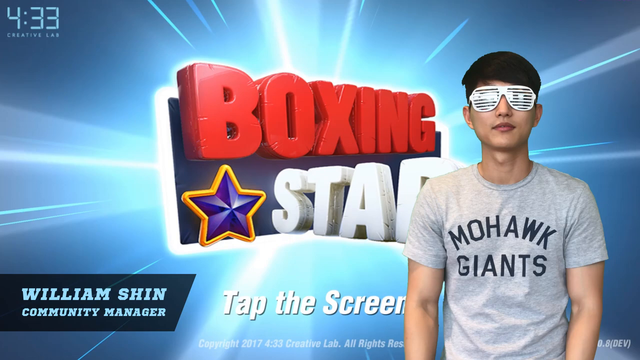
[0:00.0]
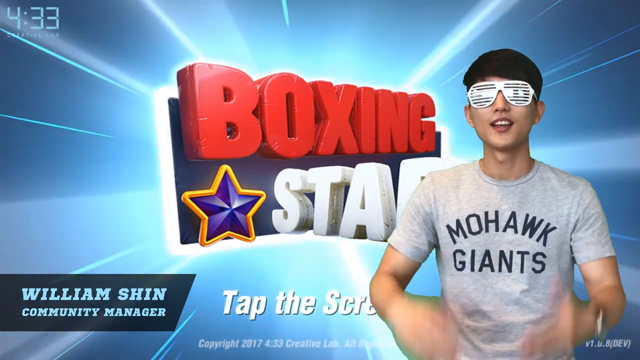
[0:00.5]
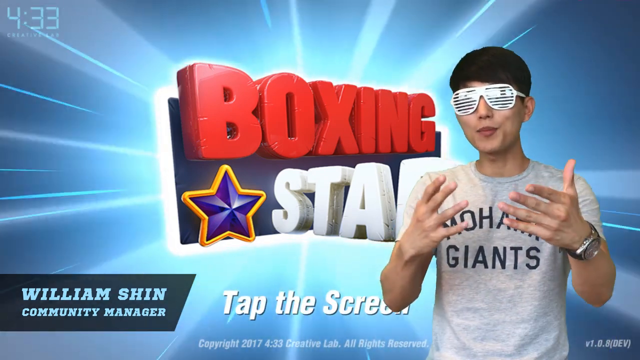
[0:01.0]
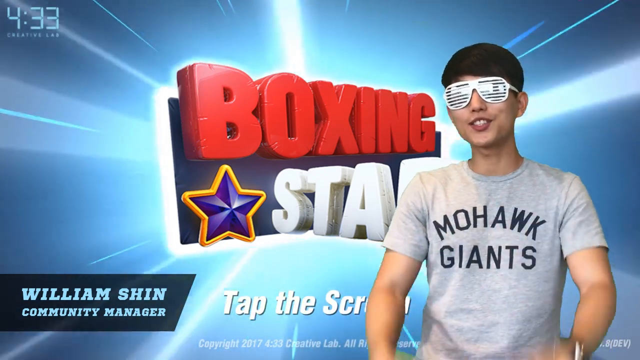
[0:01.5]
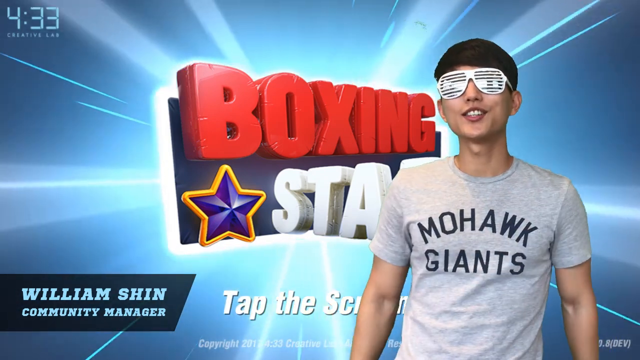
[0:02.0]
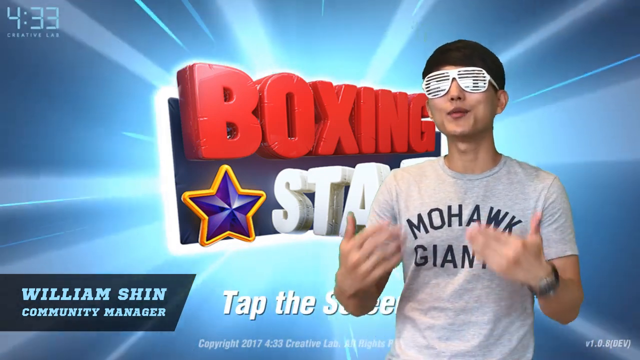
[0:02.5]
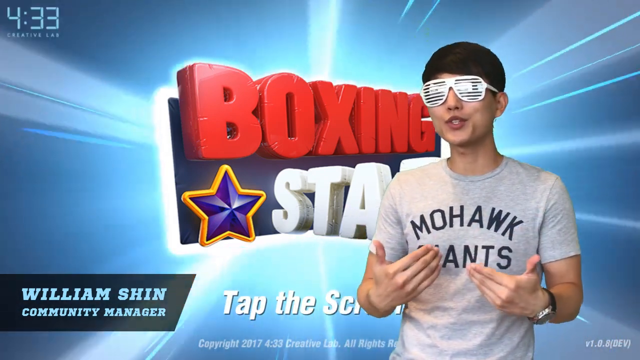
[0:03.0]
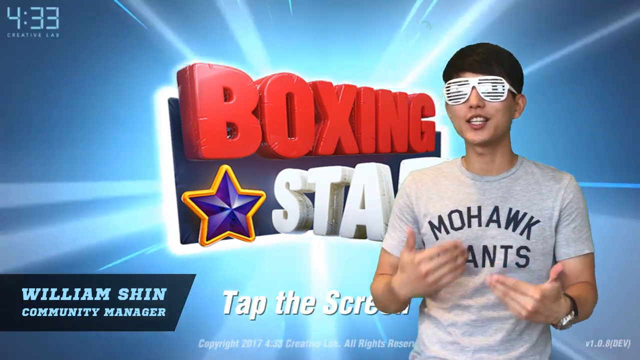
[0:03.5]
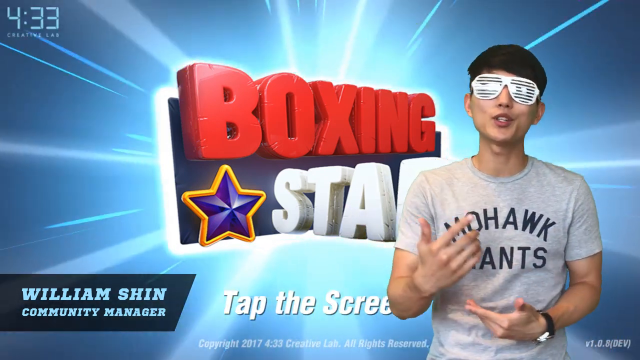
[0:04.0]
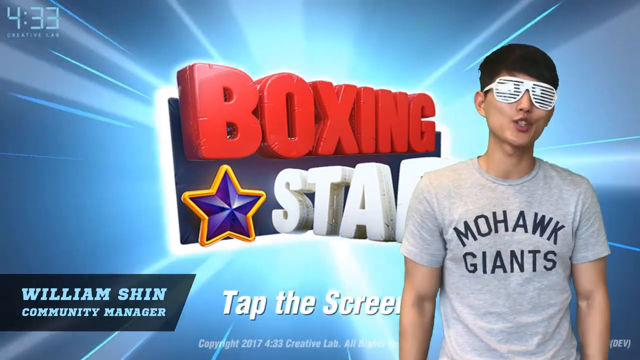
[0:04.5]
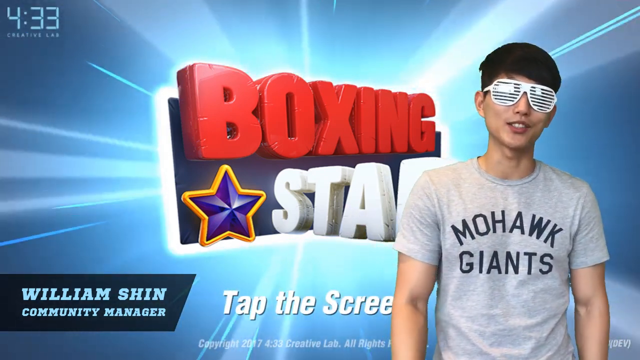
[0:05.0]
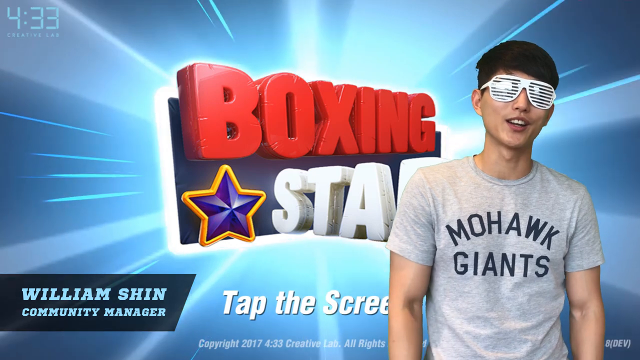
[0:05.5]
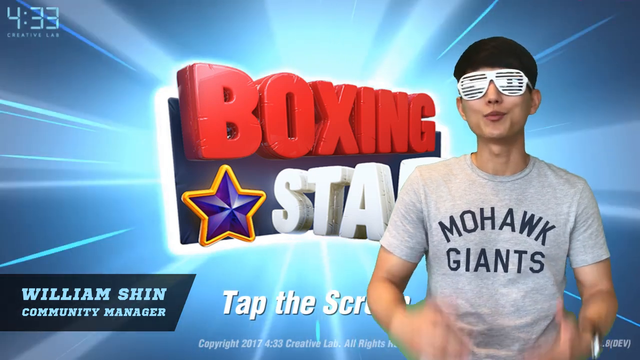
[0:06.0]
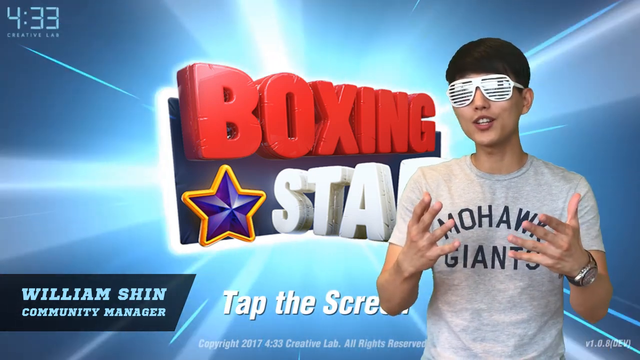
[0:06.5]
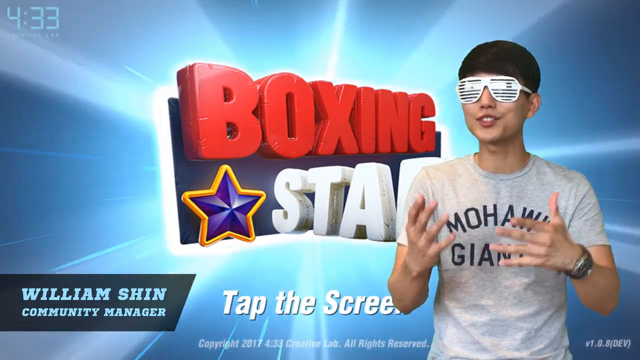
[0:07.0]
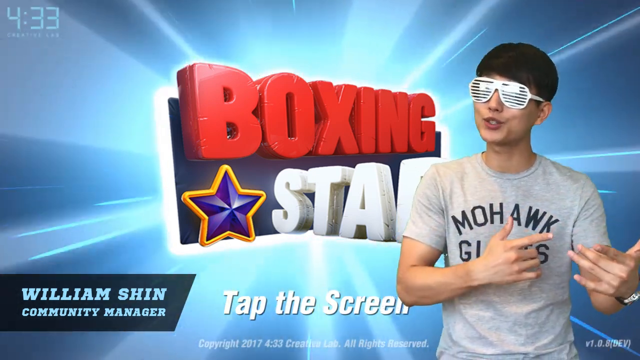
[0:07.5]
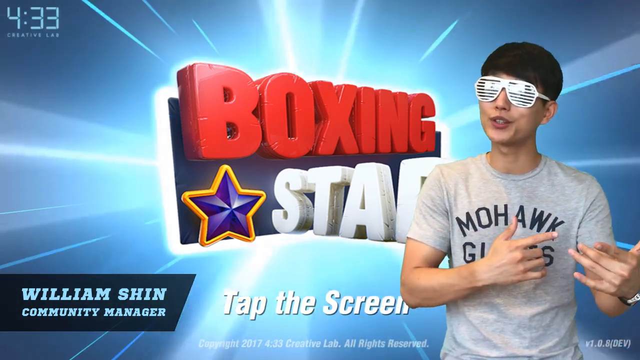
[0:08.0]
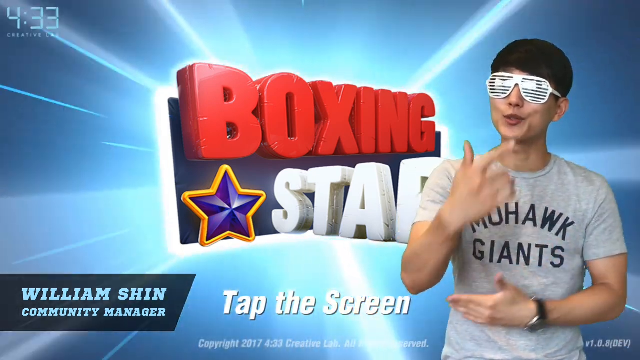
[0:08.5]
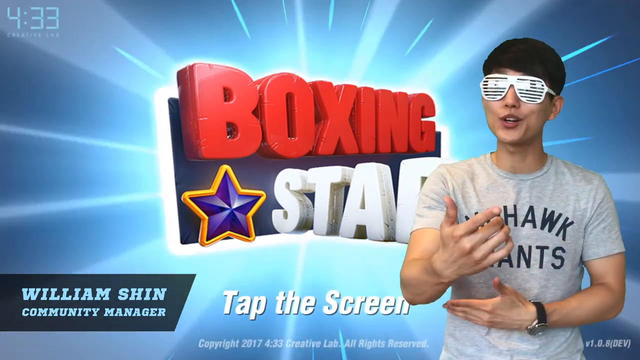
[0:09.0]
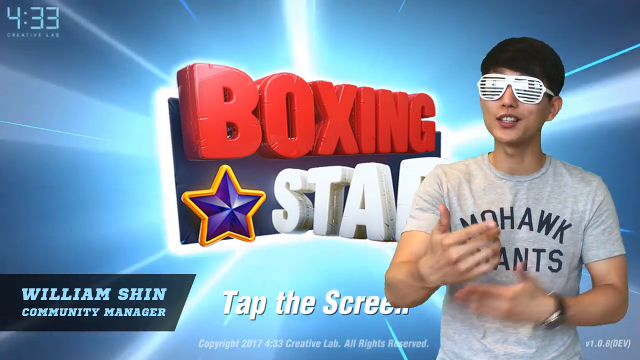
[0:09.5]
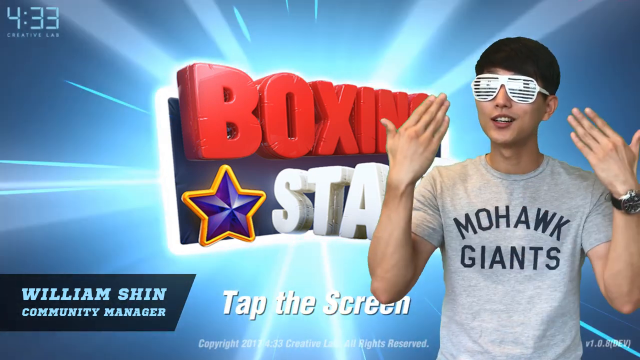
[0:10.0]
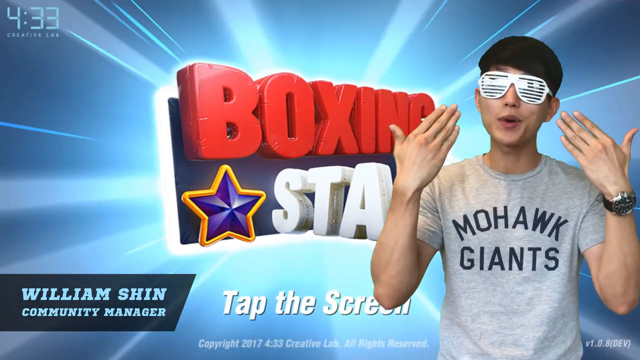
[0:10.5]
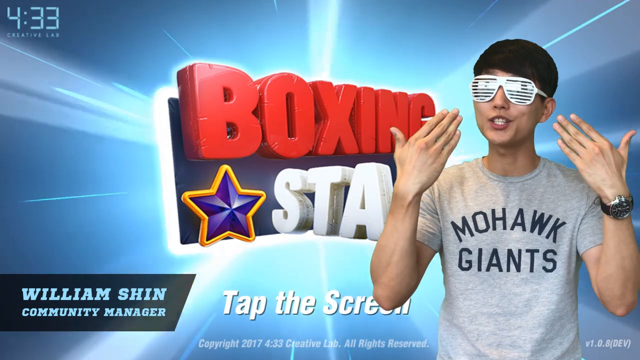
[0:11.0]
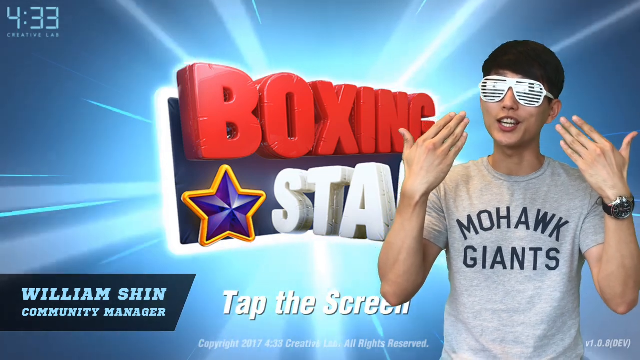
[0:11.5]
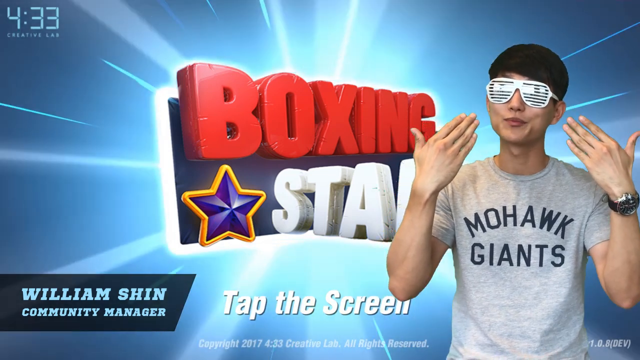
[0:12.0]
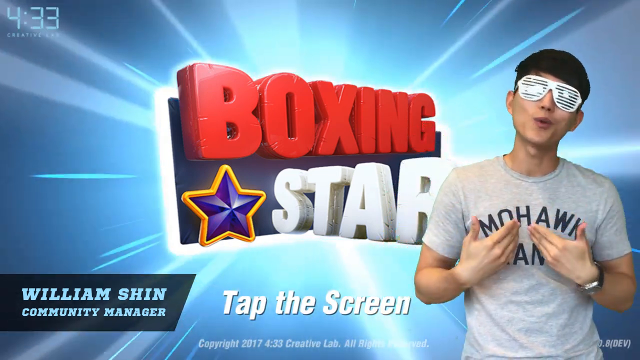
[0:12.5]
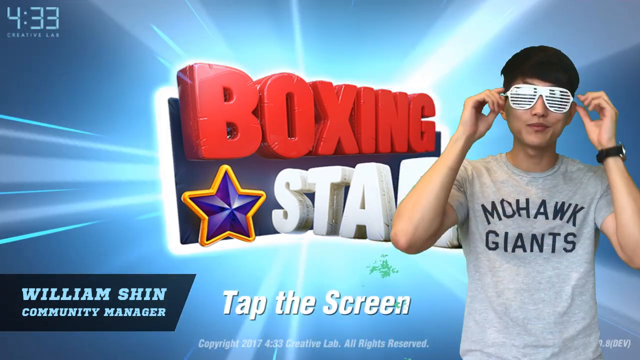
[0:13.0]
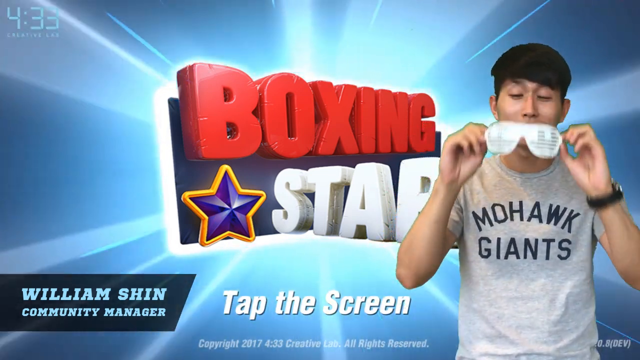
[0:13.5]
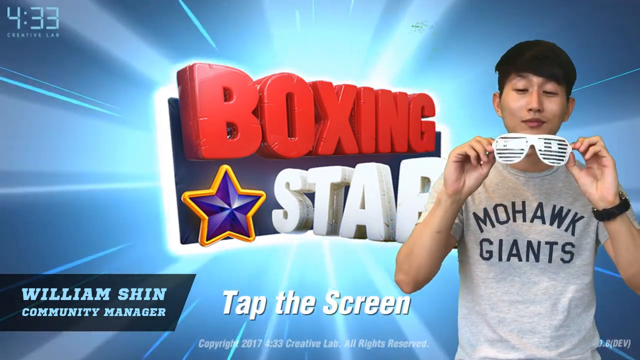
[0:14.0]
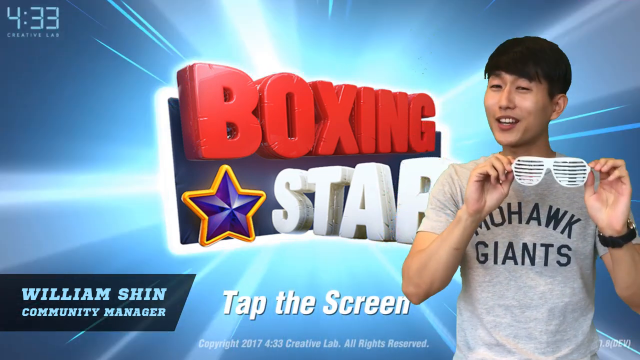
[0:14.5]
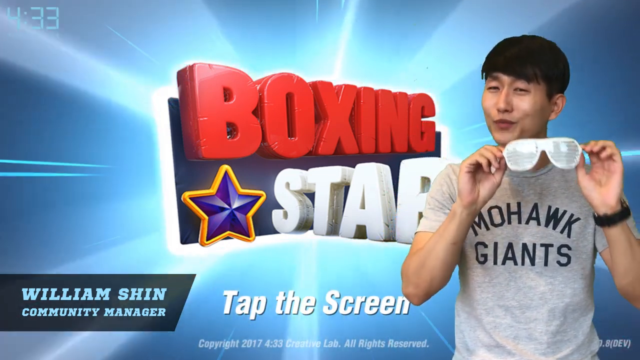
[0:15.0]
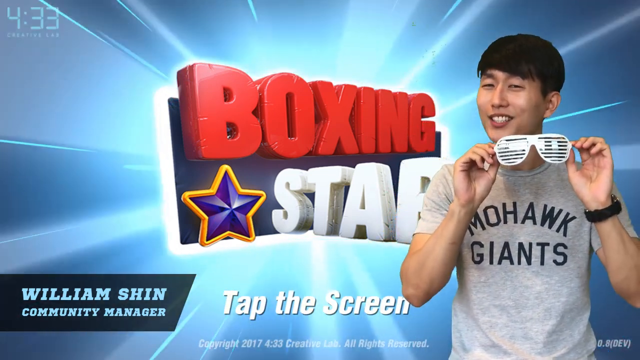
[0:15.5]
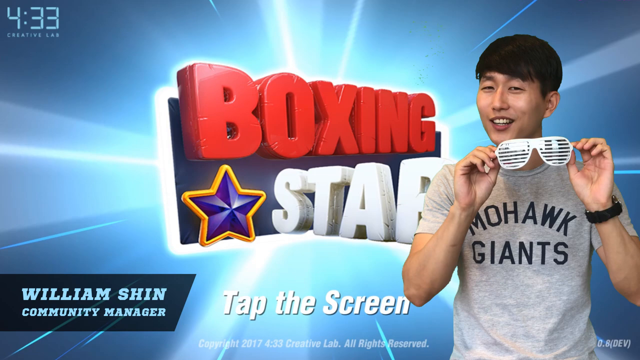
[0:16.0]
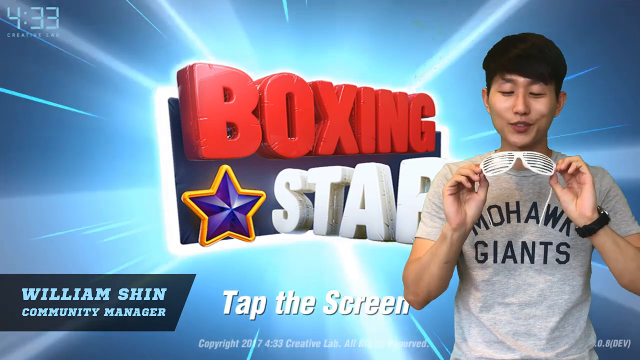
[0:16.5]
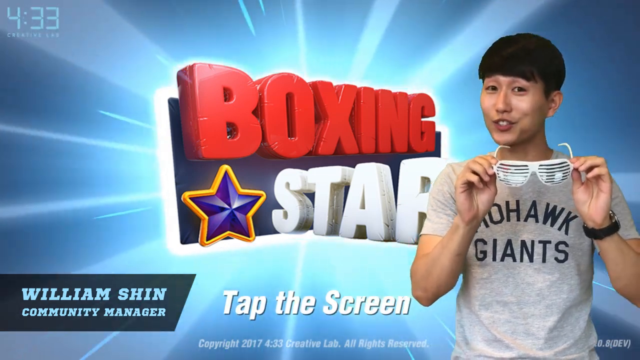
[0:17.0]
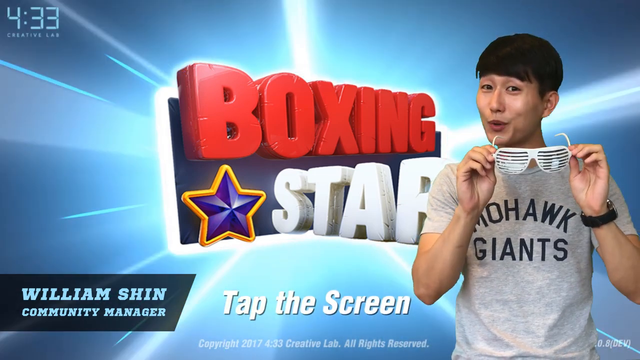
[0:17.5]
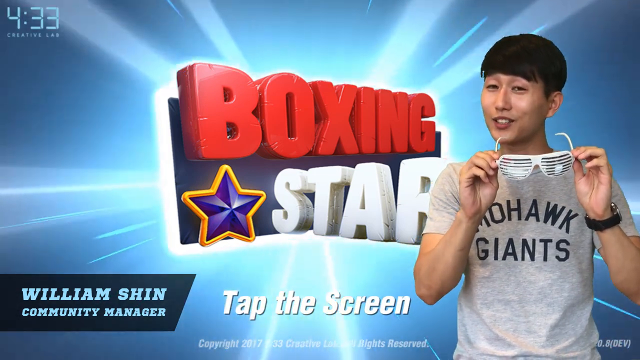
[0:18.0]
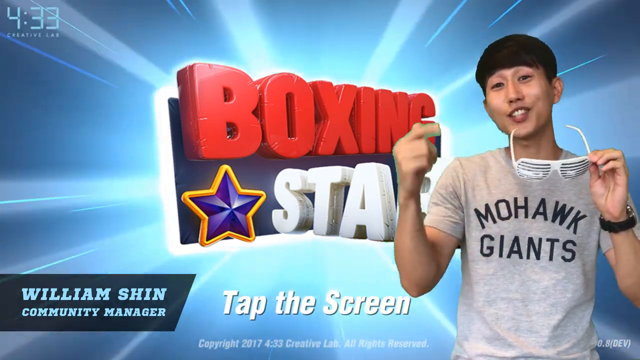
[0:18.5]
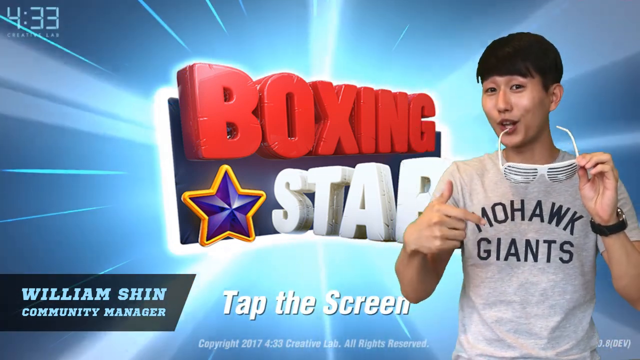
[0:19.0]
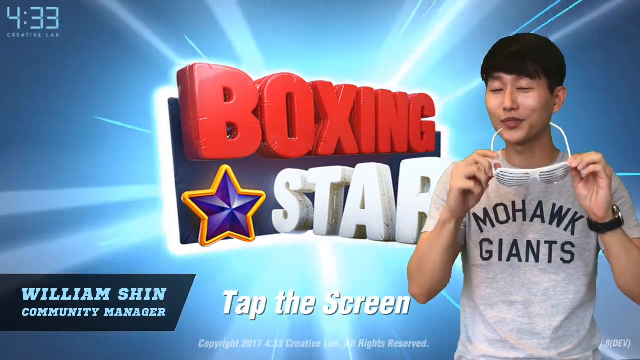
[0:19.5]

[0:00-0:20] The video opens on a man identified by on-screen text as William Shin. In the middle of the screen are the words "boxing" and "star" with effects coming out of them, so it looks like a POW burst. "Boxing" is red, and "star" is underneath it, extending out toward the right-hand side, in white. Under the B of "boxing" is a purple star with a yellow outline. The background is blue with white effects. In the bottom left the text reads "William Shin" and "community manager". He wears white glasses that have no lenses, only strips across the frames, and a grey t-shirt with "mohawk giants" on the front. The words "tap the screen" also appear. It looks like the start of a YouTube-style video. In the top left corner is a timer or time reading "4 33". William holds his thumbs up to the screen and moves his hands for emphasis as he talks. He holds his hands up on either side of his glasses to show them off, takes them off and holds them up to the screen, then puts them back on.